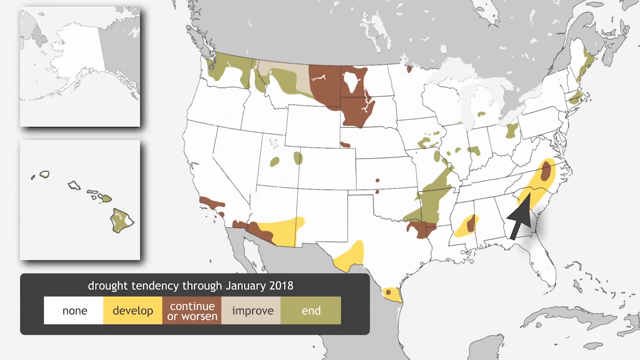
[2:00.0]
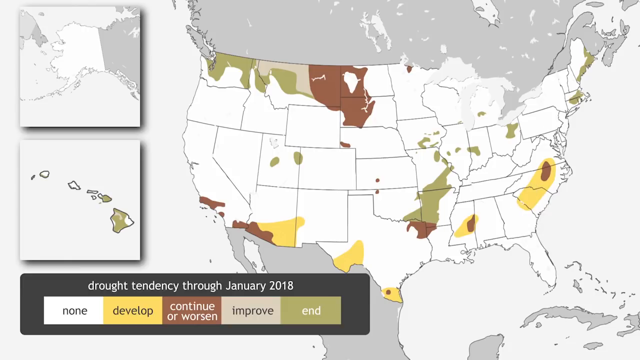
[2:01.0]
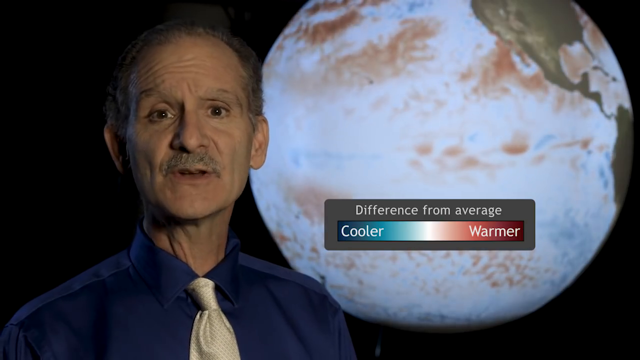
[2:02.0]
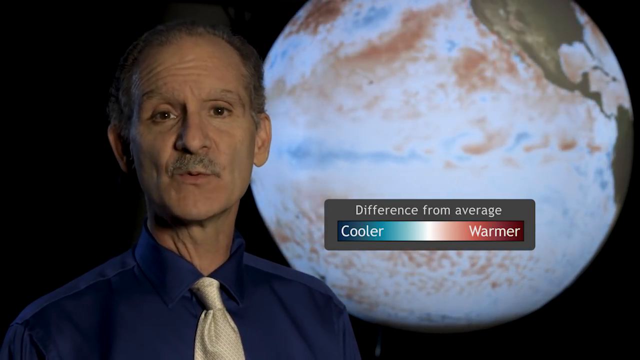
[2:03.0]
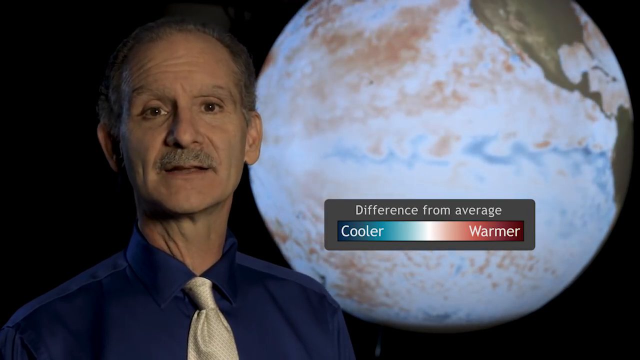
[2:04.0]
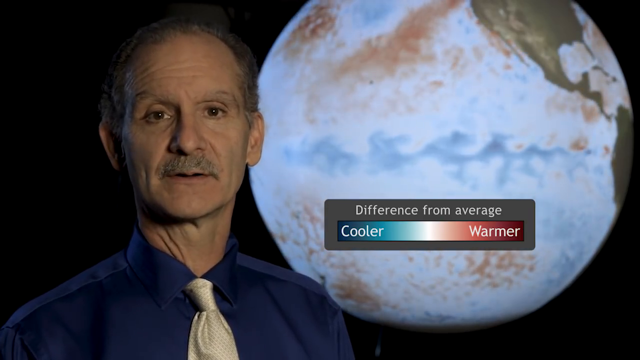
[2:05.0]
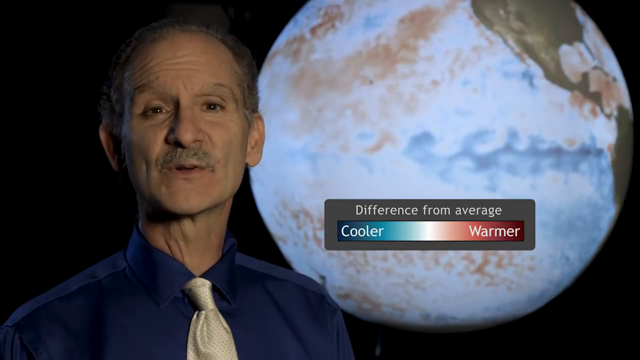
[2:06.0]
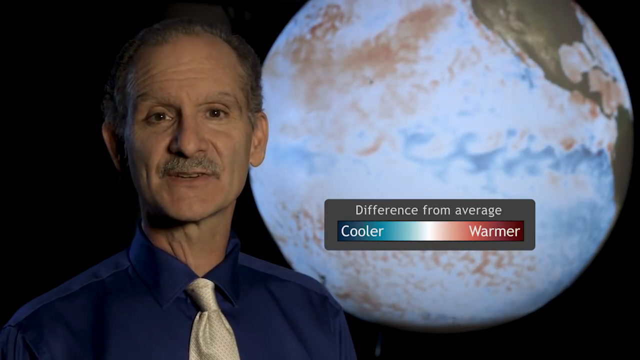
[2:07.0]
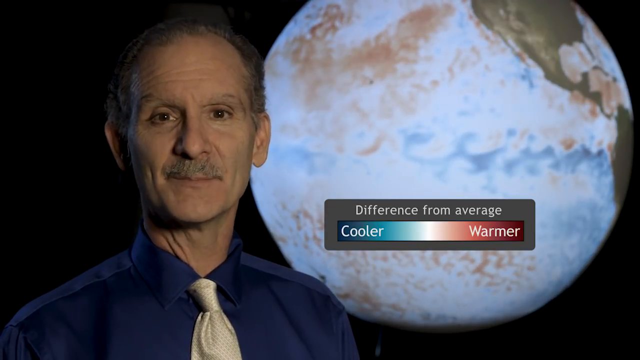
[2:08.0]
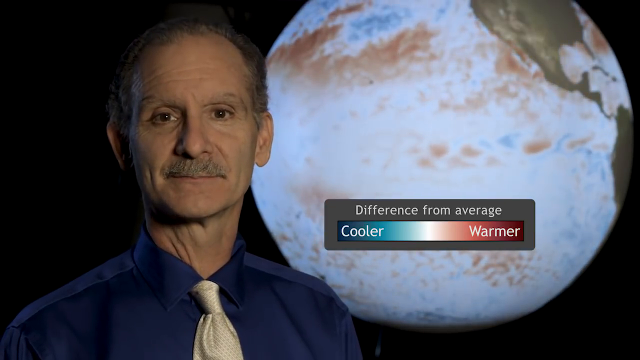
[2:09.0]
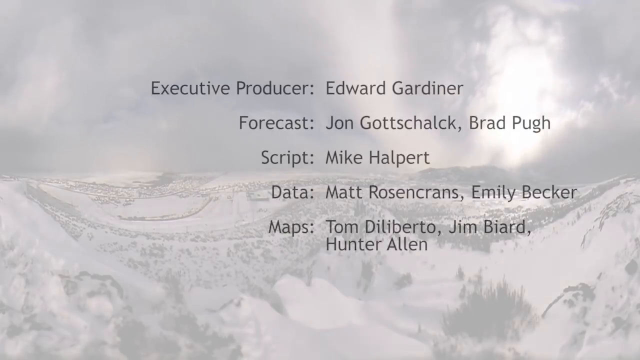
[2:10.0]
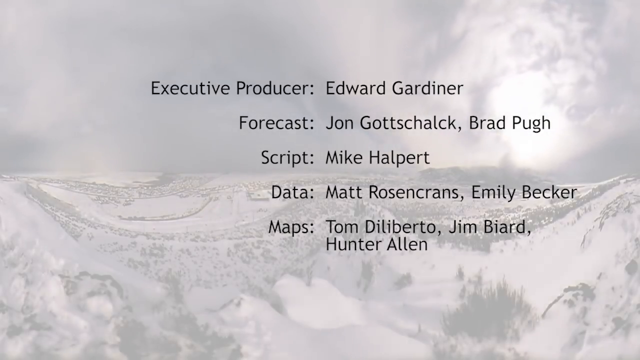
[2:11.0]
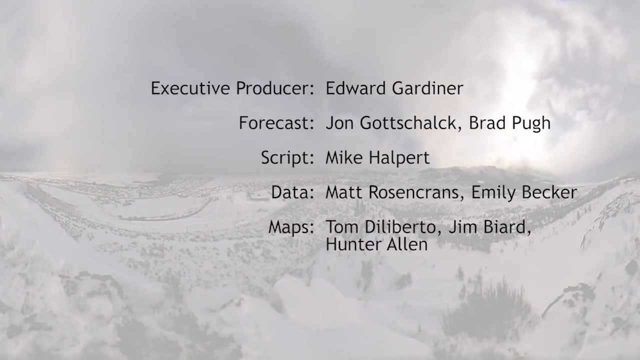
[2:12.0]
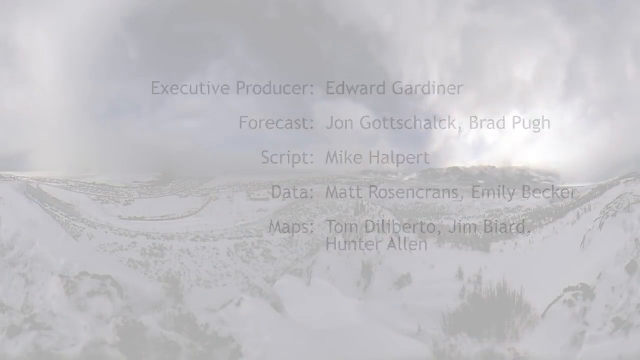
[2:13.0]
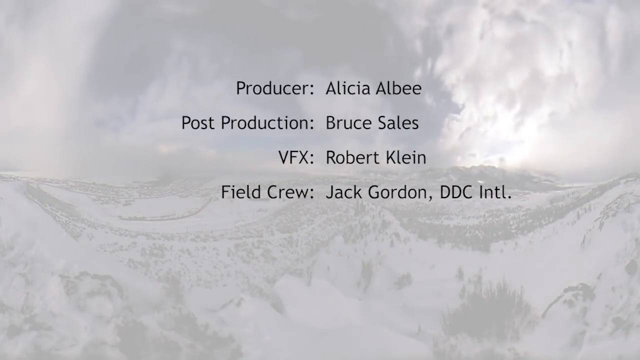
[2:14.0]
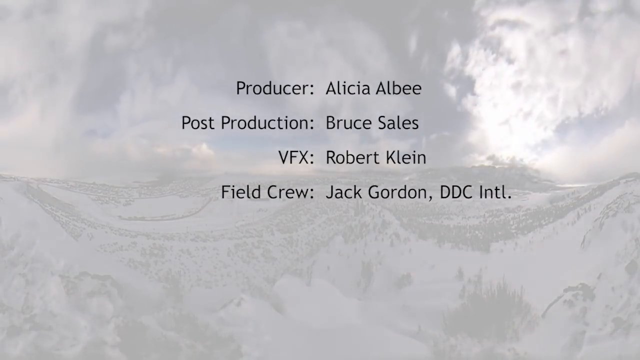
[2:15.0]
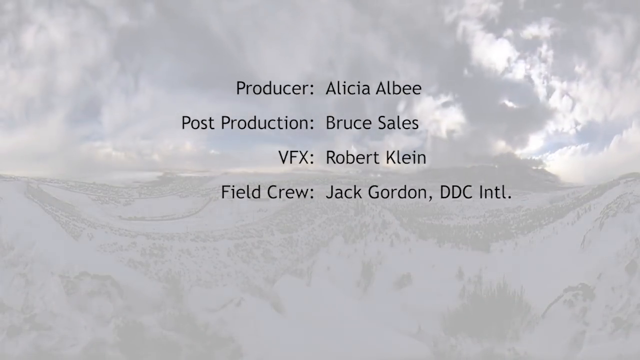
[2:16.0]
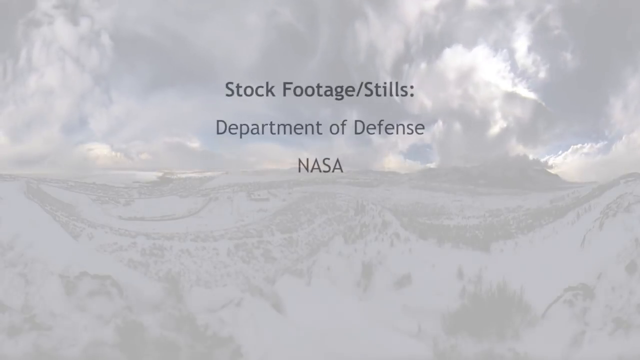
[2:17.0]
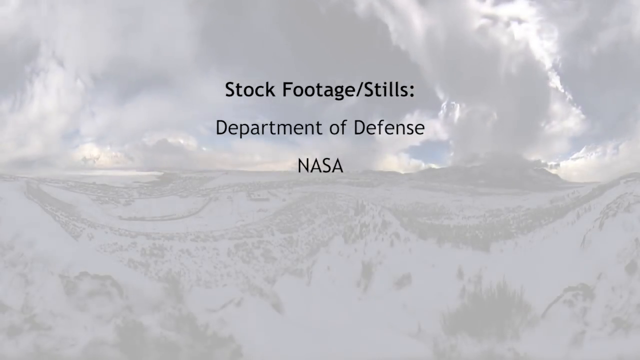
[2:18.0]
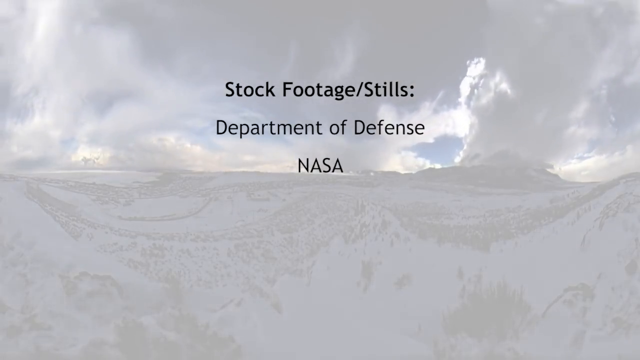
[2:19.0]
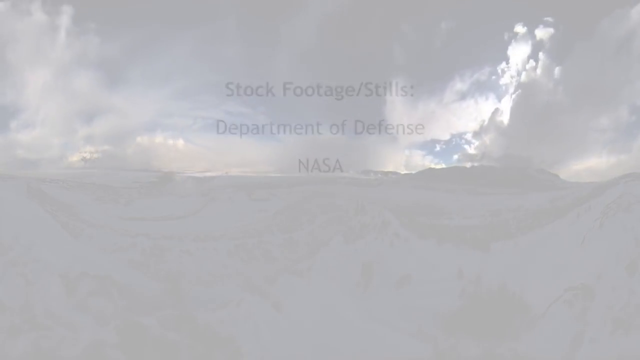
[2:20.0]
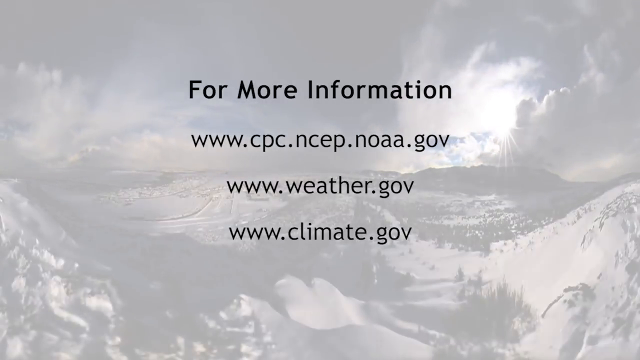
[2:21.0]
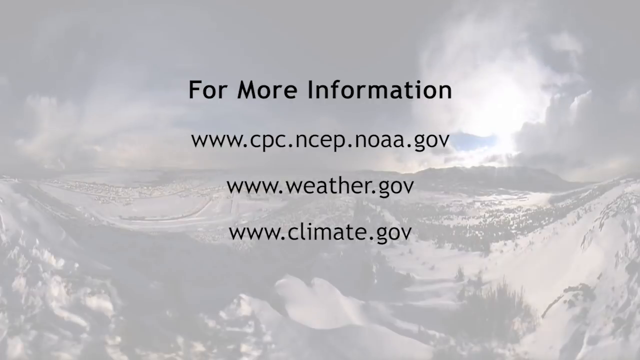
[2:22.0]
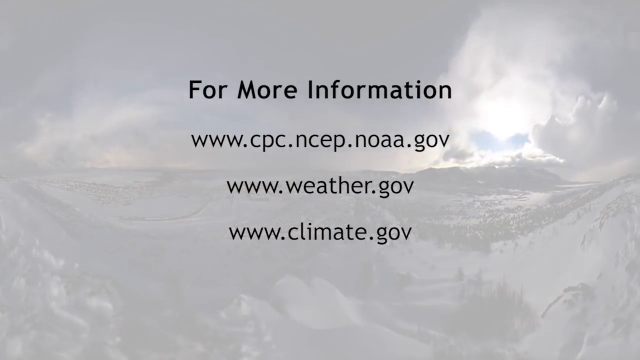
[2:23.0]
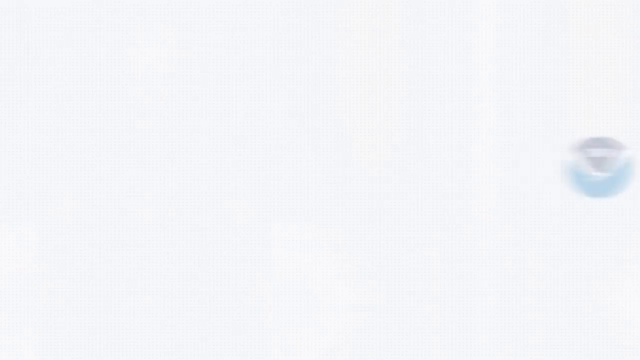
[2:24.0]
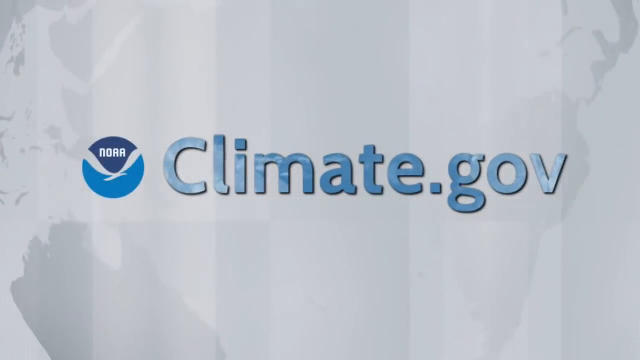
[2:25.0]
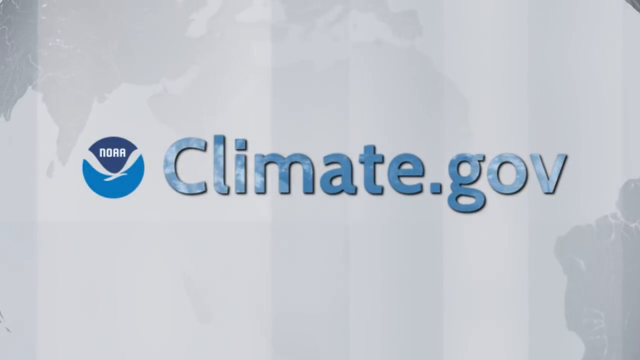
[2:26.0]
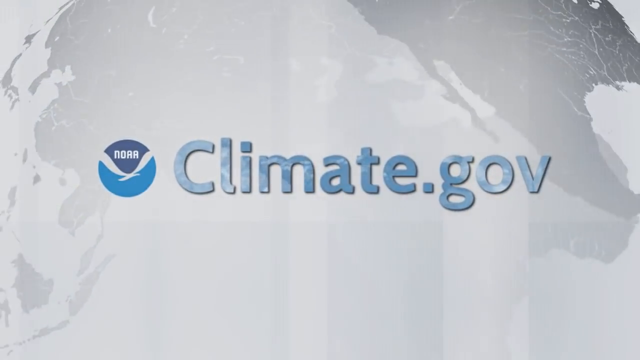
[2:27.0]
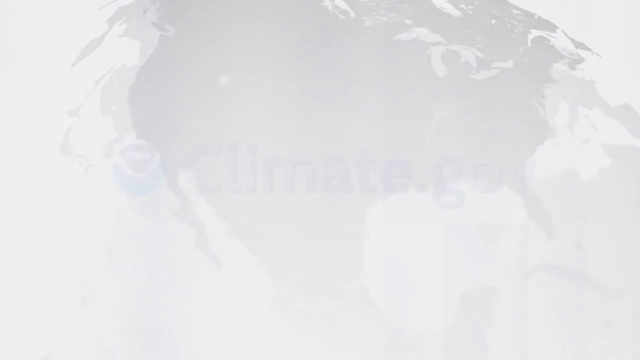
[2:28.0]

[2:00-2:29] The map screen shows drought conditions, improvements, developments, a worsening effect and an end to drought conditions. The narrator looks slightly concerned; he wears a blue silk shirt with a white or silver tie, is an older-looking man with thinning hair and a pencil-thin mustache, and looks like a scientist. He speaks in front of something displaying various climate change indexes. Credits list Emily Becker for the forecast, and the maps by Tom DiLiberto, Jim Baird and Hunter Allen; in the background of the credits, cloud coverage moves very rapidly. The stock footage and stills are credited to the Department of Defense and NASA, followed by sites to go to for more information. The video then ends abruptly.